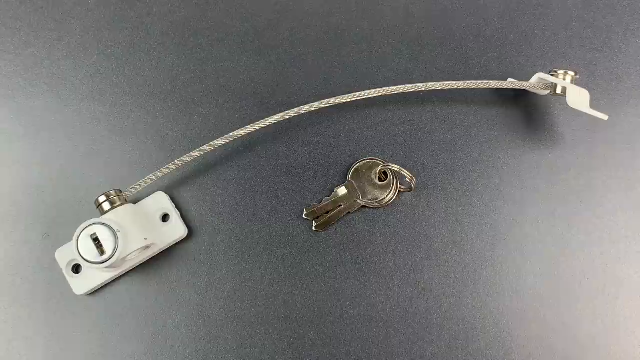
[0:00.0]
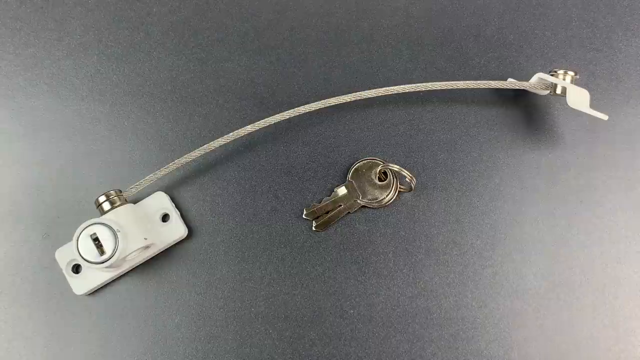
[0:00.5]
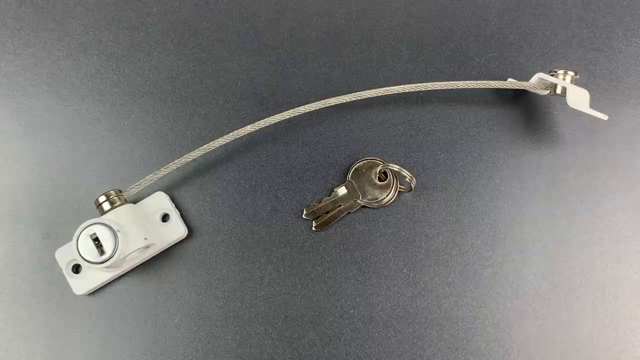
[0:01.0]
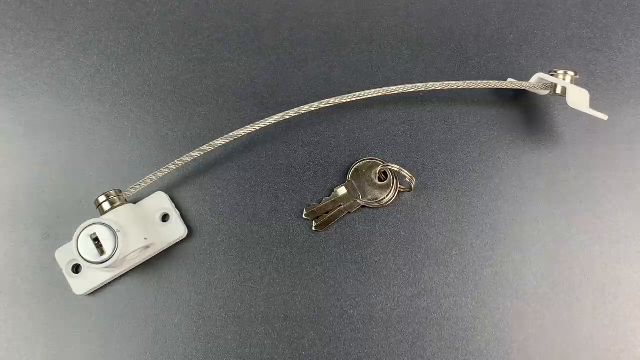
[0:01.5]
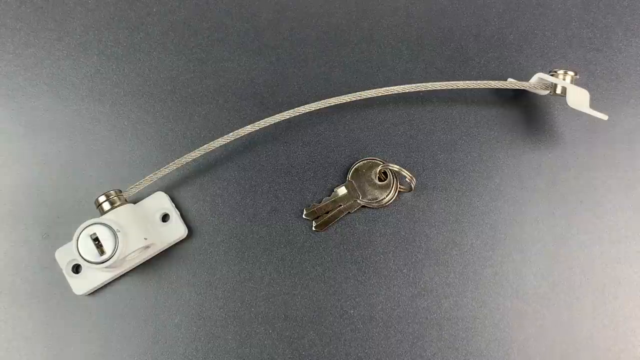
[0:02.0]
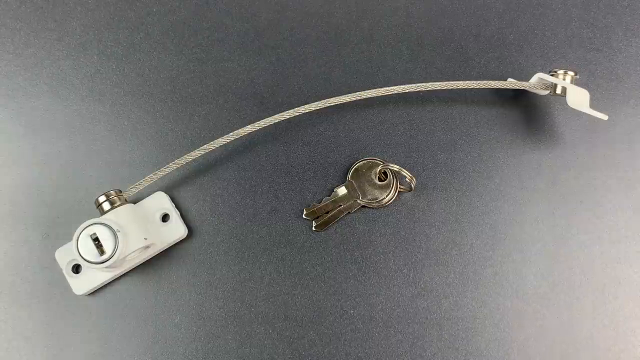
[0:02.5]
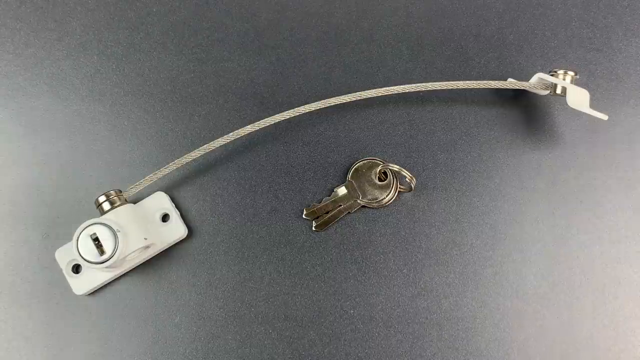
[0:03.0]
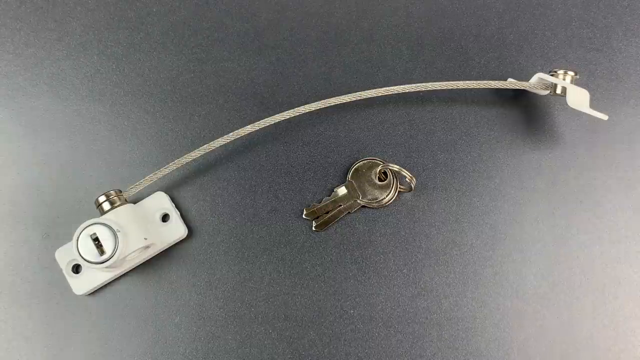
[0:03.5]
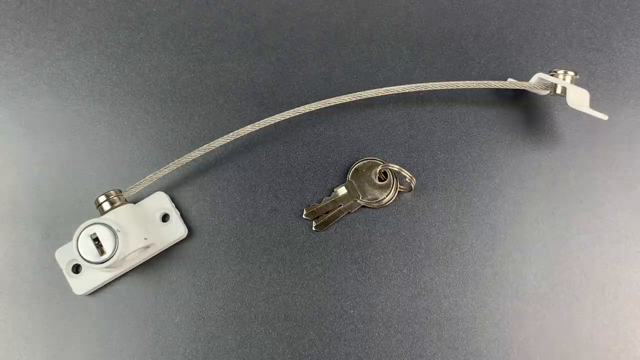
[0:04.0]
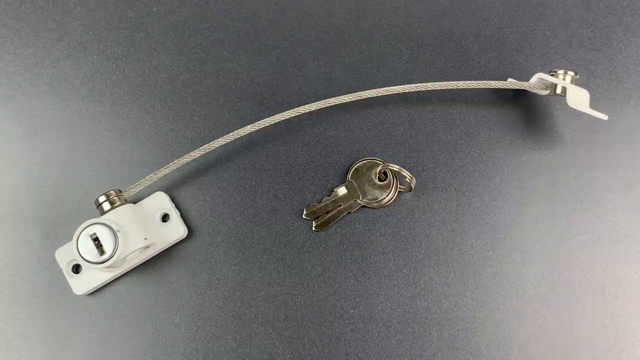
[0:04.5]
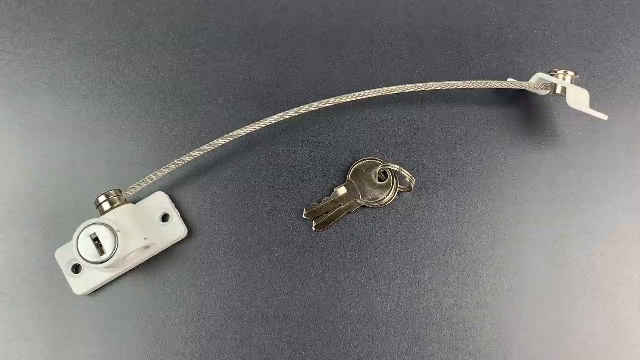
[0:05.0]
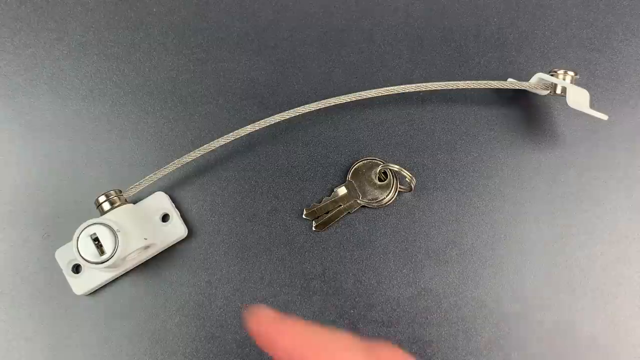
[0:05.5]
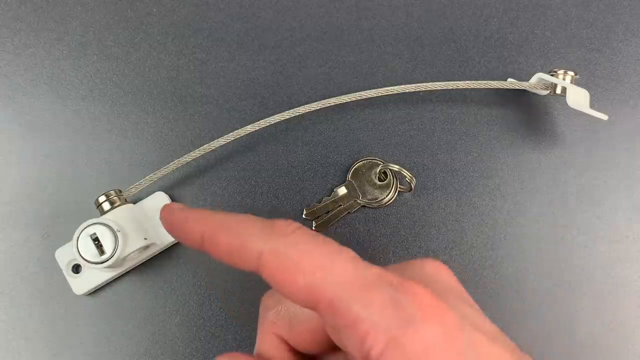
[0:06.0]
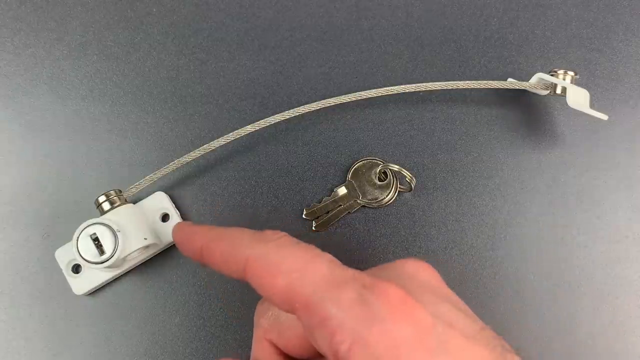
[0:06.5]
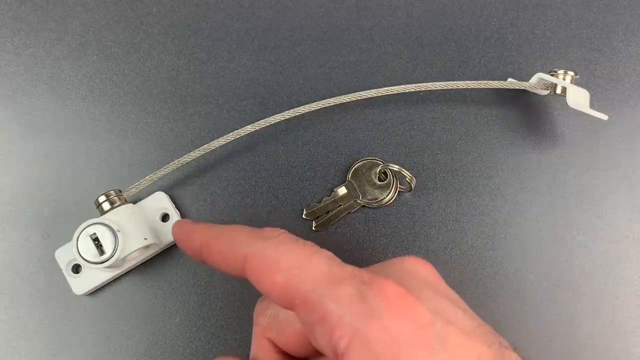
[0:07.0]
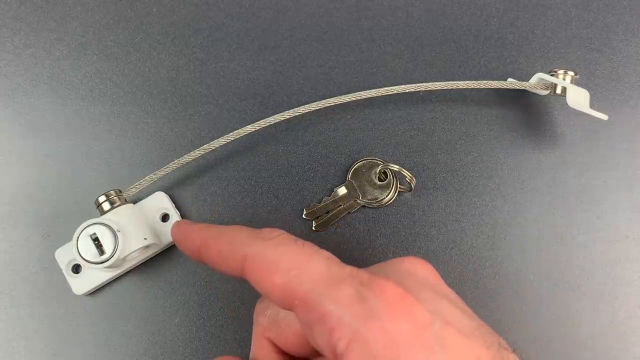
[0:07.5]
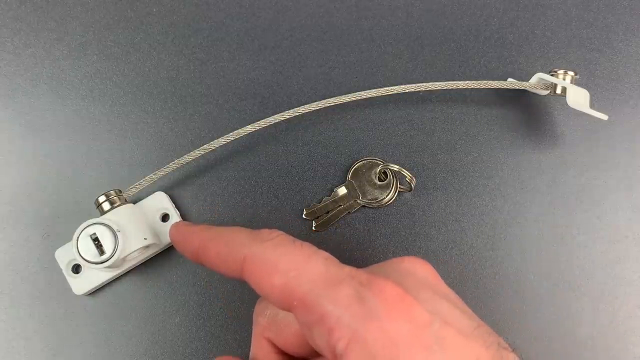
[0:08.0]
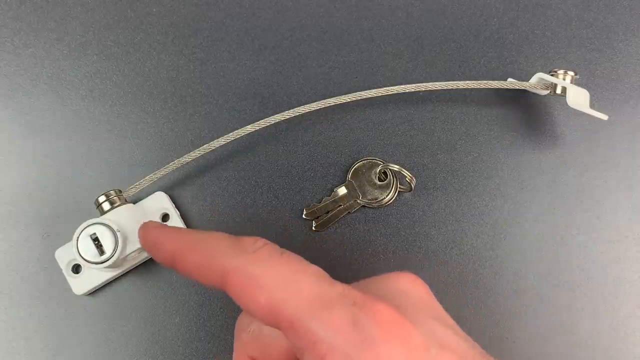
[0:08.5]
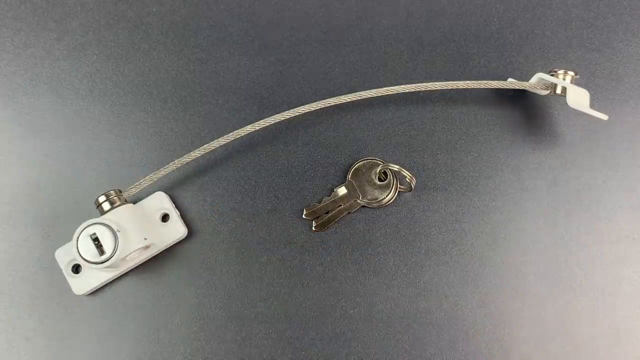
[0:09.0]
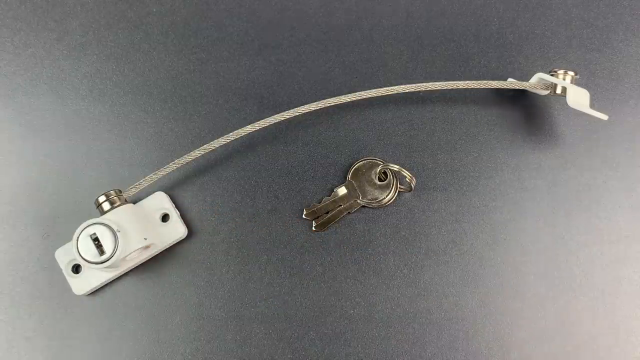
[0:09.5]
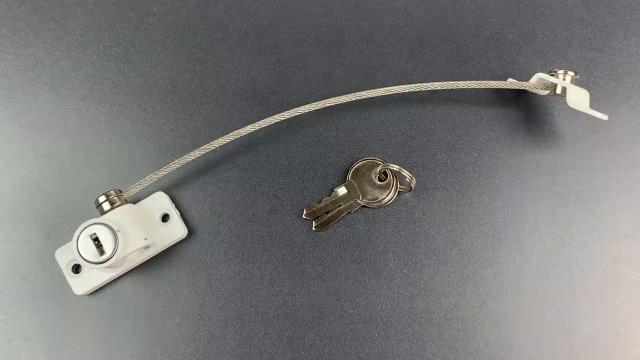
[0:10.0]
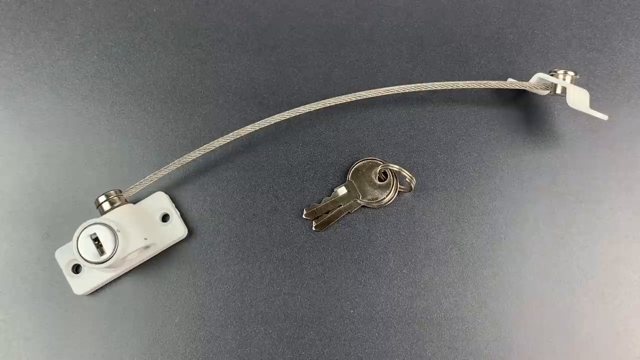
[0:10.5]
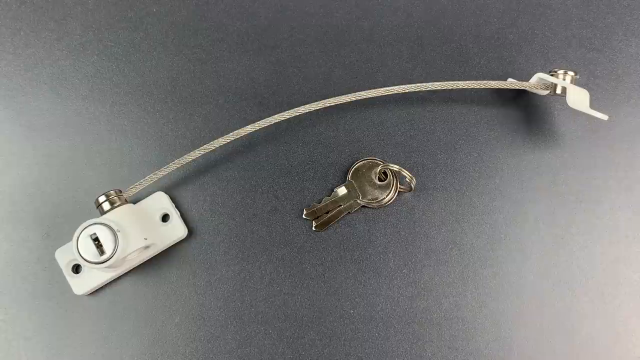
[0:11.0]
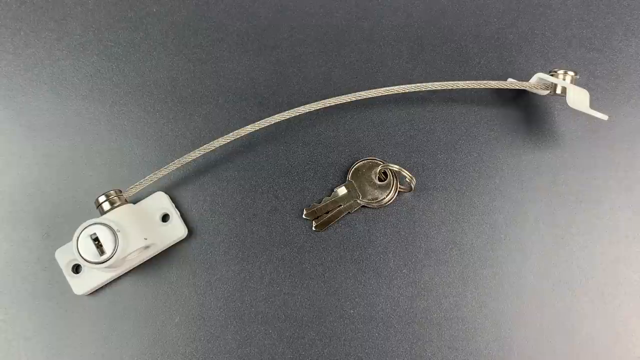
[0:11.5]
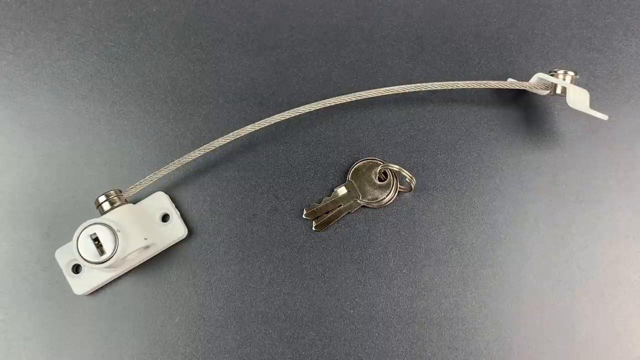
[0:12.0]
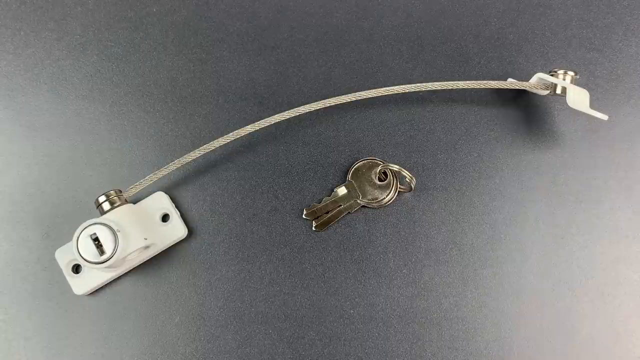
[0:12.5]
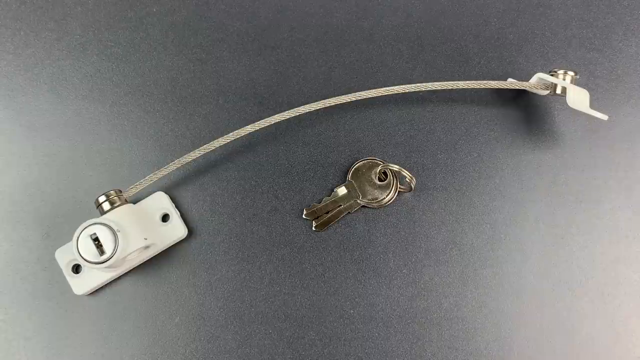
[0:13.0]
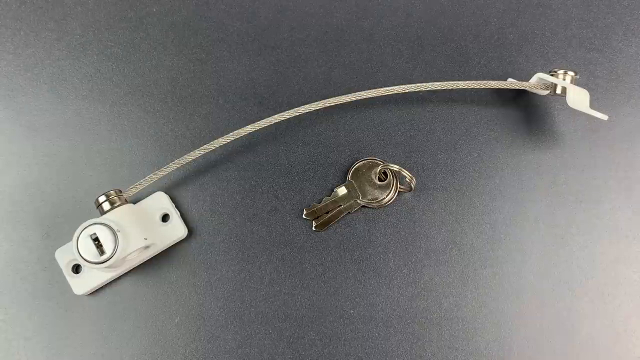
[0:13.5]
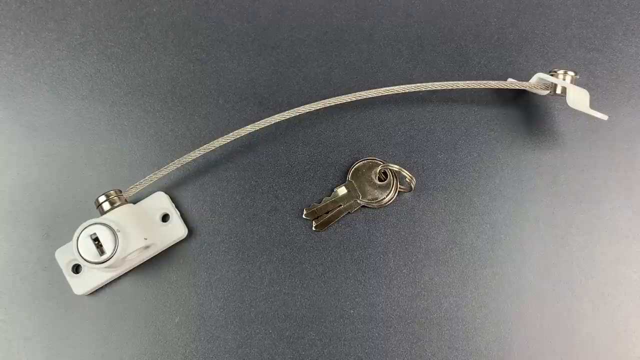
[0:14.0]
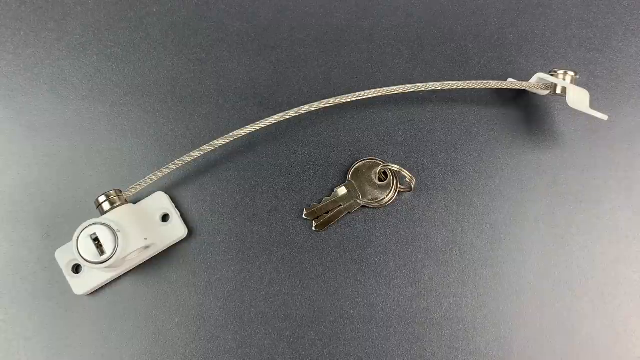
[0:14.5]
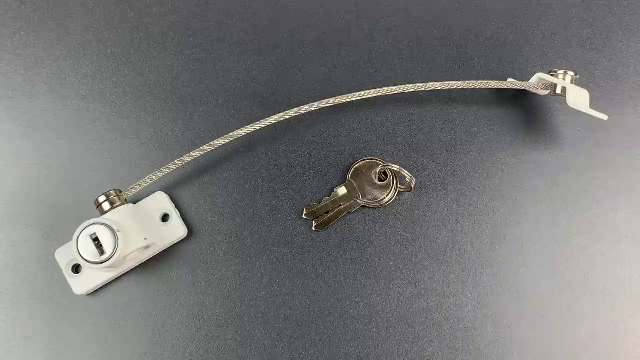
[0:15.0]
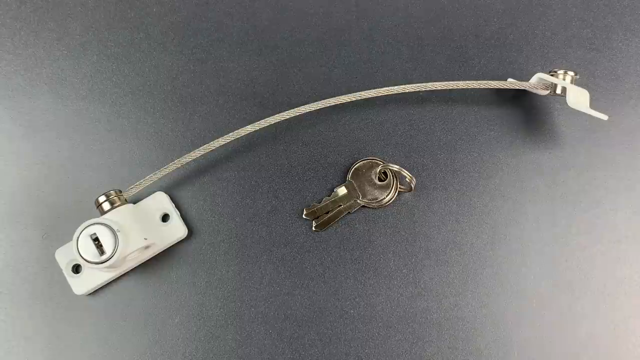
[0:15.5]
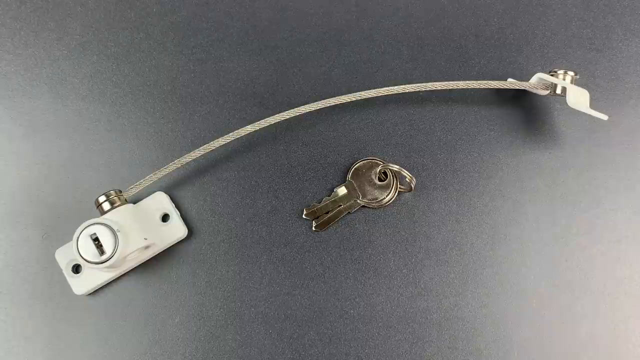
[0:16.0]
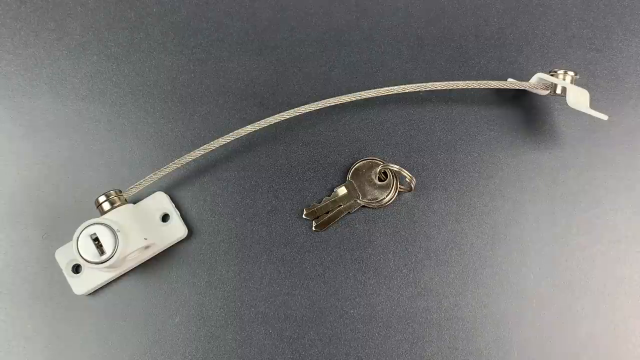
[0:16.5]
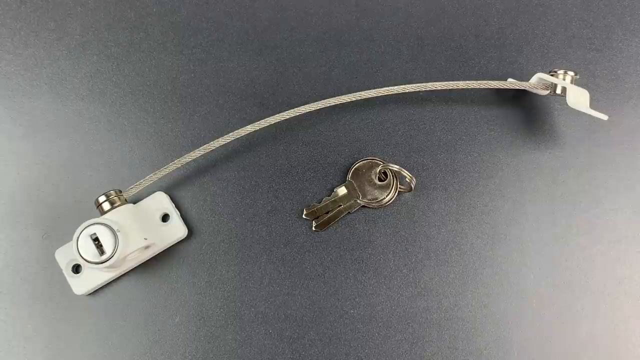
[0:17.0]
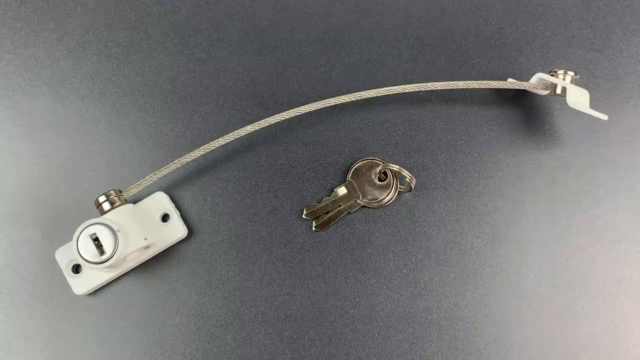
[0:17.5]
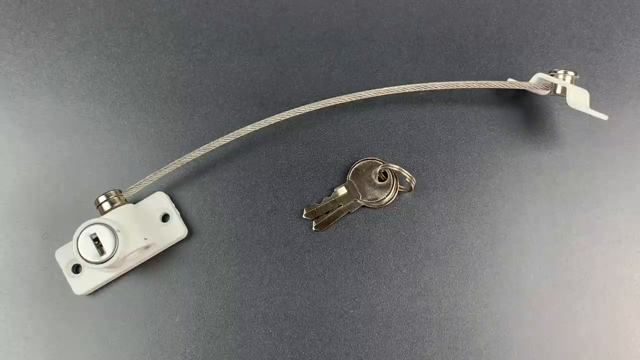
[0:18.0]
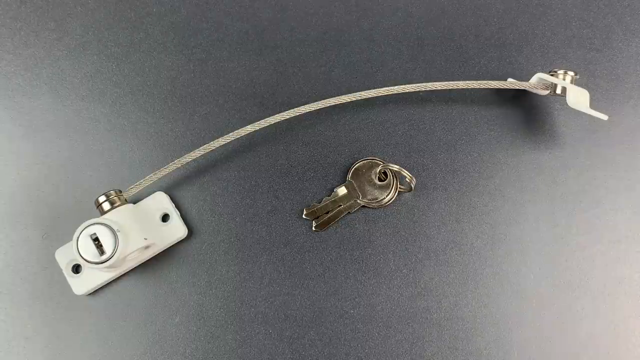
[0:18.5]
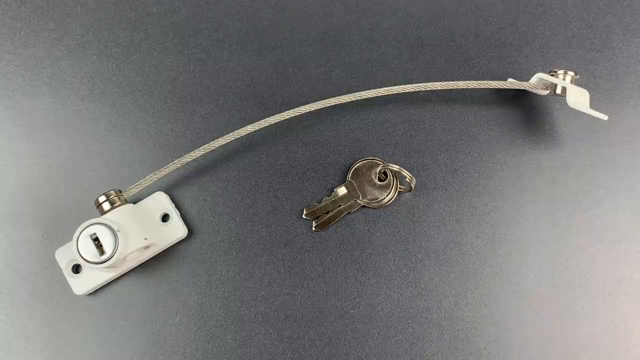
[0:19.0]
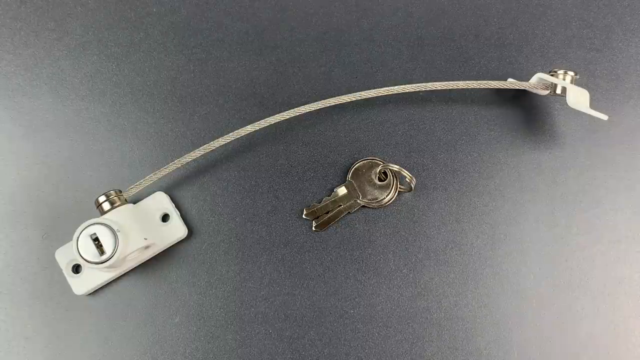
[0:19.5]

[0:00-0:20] A white rectangular object has a bar coming out of it. The bar has a screw on one side; the object has one hole on each side and a bigger hole in the middle. A set of keys is also present, so the white object is perhaps a lock, possibly one meant to be screwed into the side of a door, with the center being where the key goes. The white bar on top looks like it swivels. There are two keys on a key chain; they are plain silver with no color and no apparent words on them. The lock is all white with a silver round thing on the top, a white bar that goes over the top, and a silver screw-like piece on the other end.